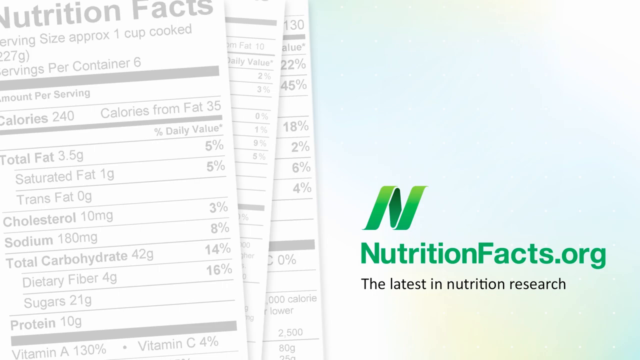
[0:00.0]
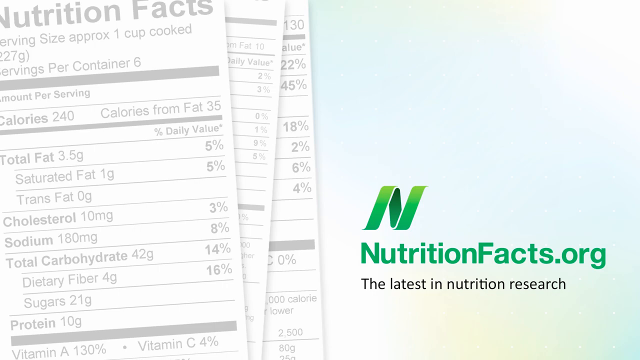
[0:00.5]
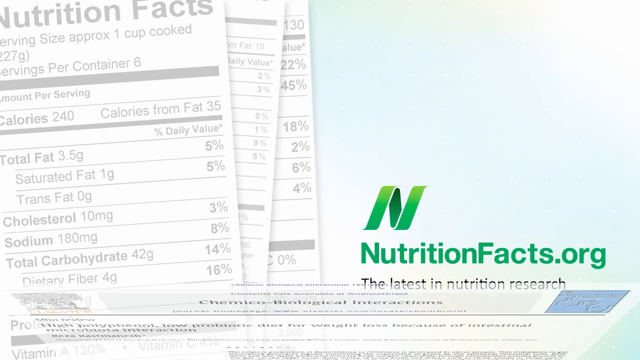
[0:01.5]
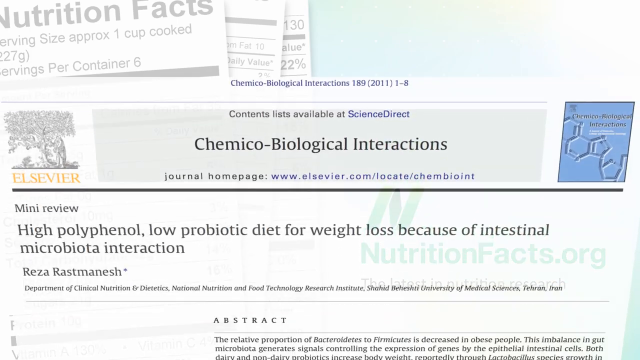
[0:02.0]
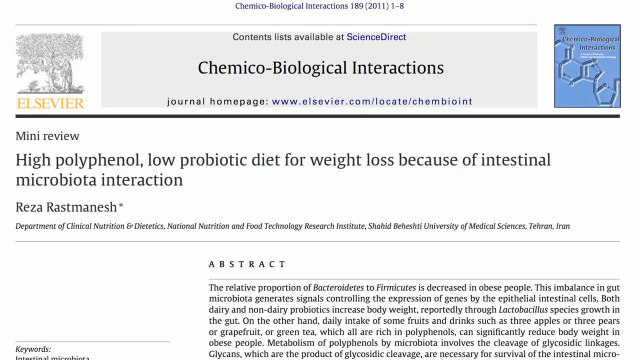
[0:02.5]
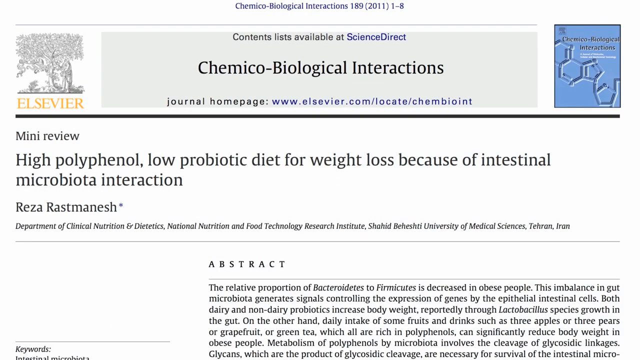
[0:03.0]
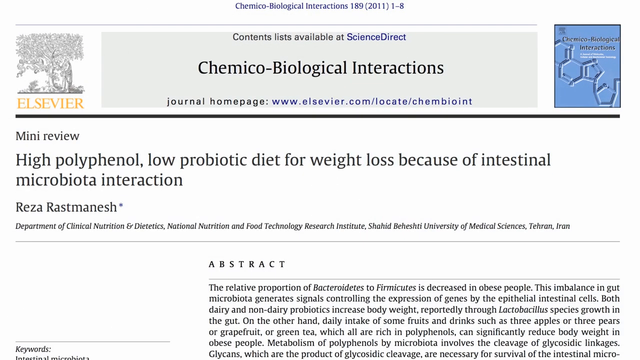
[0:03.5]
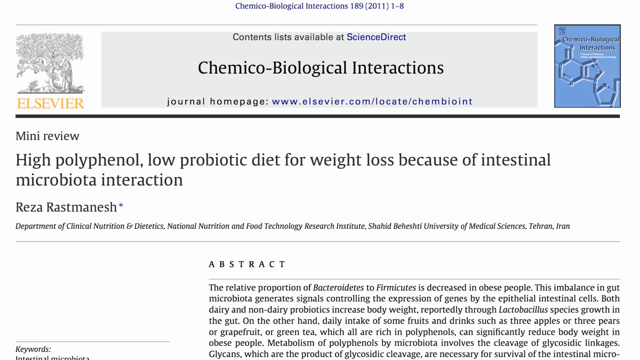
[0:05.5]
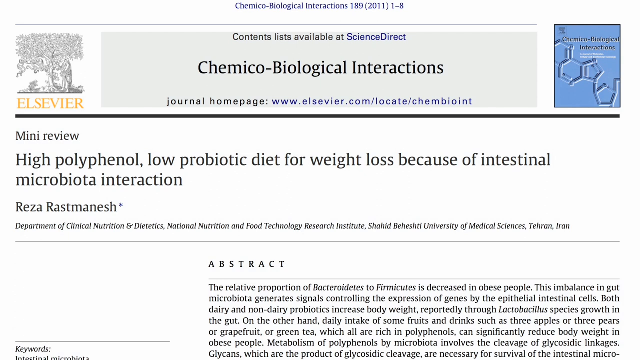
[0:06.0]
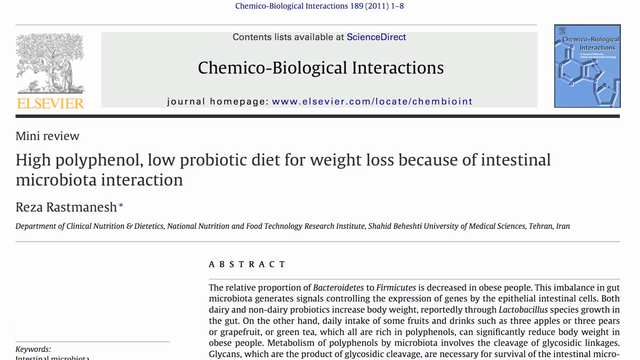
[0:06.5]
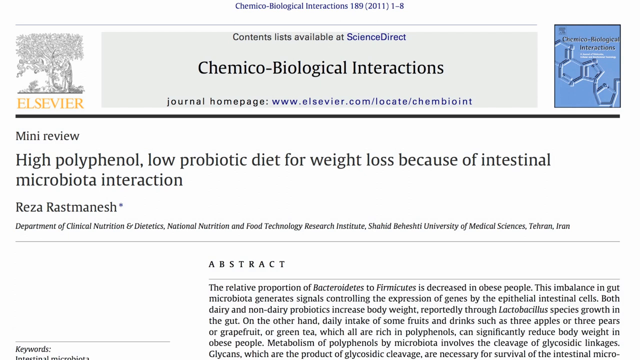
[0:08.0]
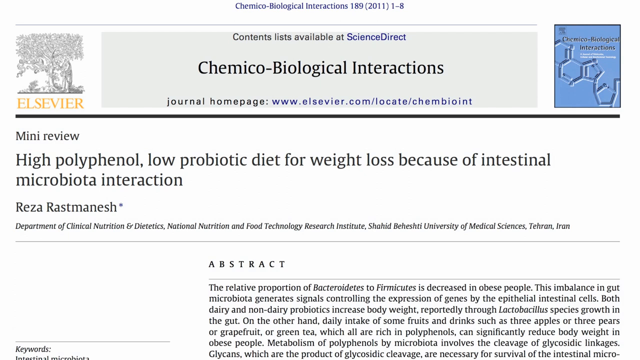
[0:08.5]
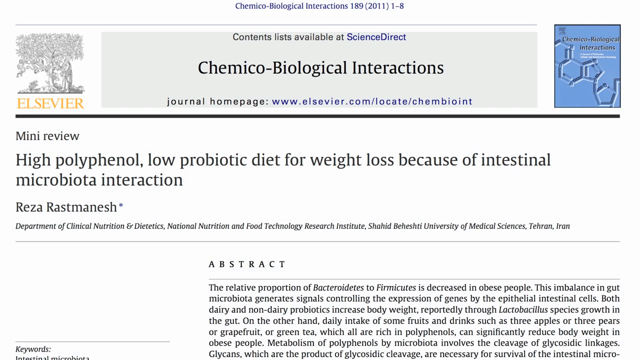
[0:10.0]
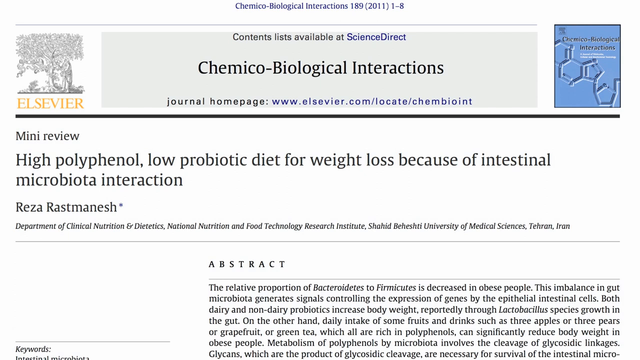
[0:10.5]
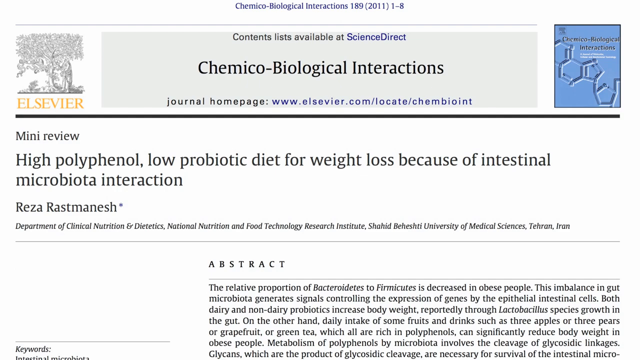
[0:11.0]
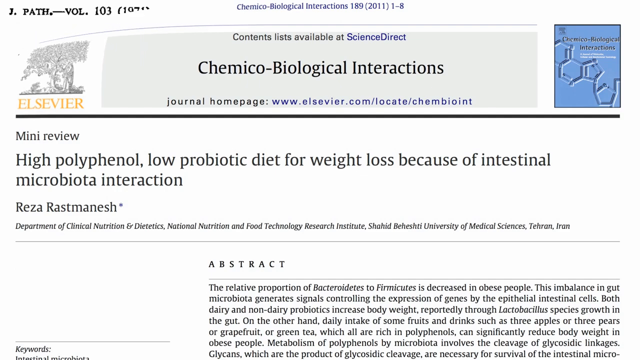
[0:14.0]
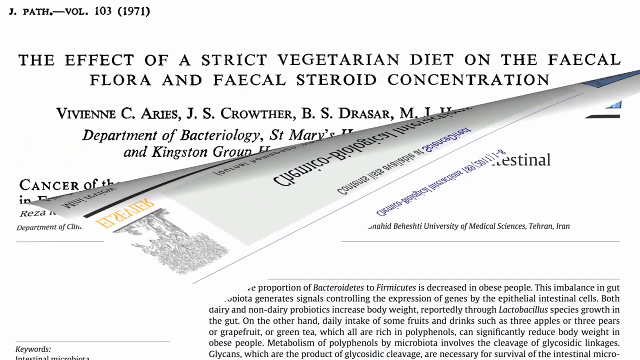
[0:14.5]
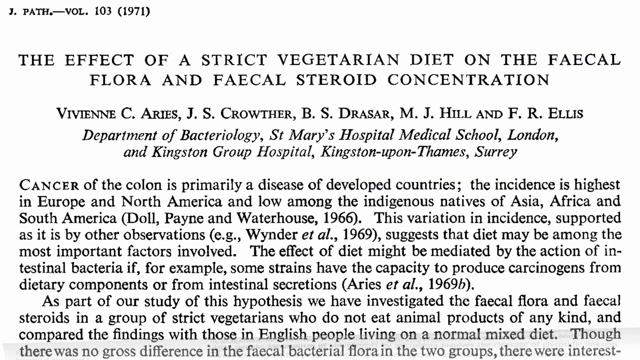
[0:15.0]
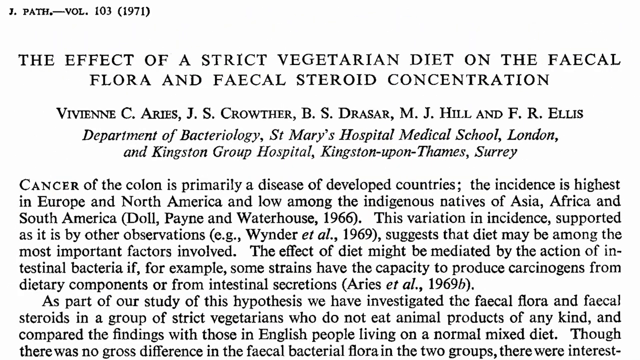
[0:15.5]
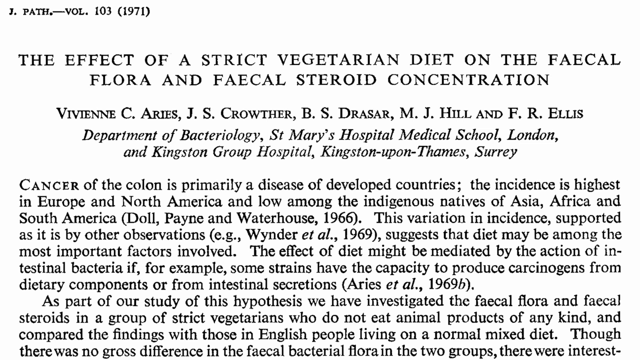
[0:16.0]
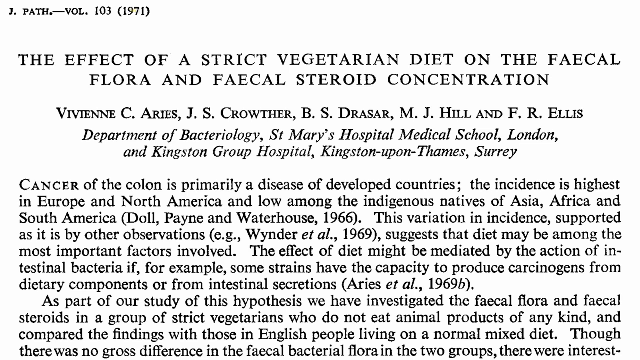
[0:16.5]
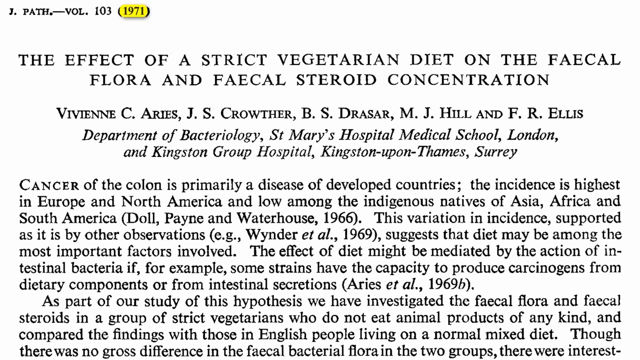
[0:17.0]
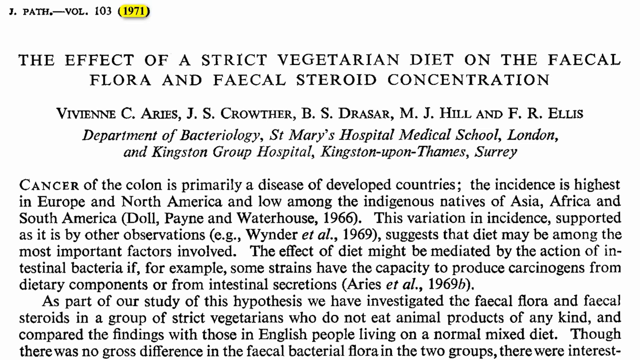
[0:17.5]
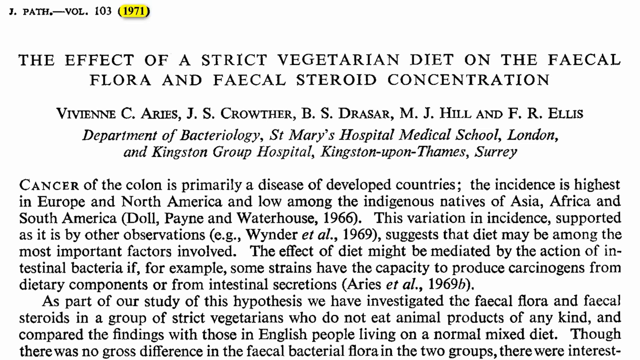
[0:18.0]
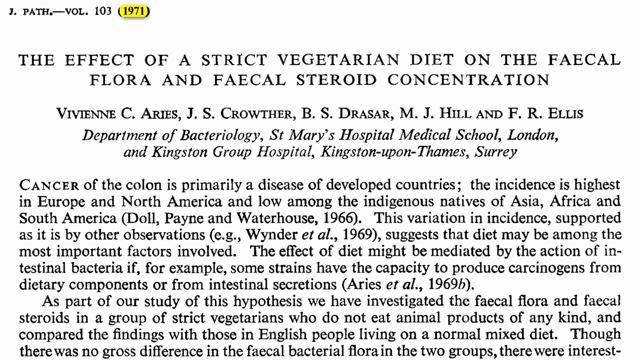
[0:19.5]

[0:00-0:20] In green at the bottom right is the letter N, with "nutritionfacts.org" below it, and below that, in black text, "the latest in nutrition research." On the left side of the screen is what looks like an ingredients or nutrition facts list reading "serving size approximately one cup cooked," "servings per container six," "calories 240," "calories from fat 35," "total fat 3.5 grams" at 5 percent, "saturated fat one gram" at 5 percent, "trans fat zero grams," "cholesterol 10 milligrams" at 3 percent, "sodium 180 milligrams" at 8 percent, "total carbohydrate 42 grams" at 14 percent, "dietary fiber four grams" at 16 percent, "sugars 21 grams" and "protein 10 grams." The video then switches to another page with "chemical, biological interactions" in black text at the top, and just above it, "contents list available at Science Direct."